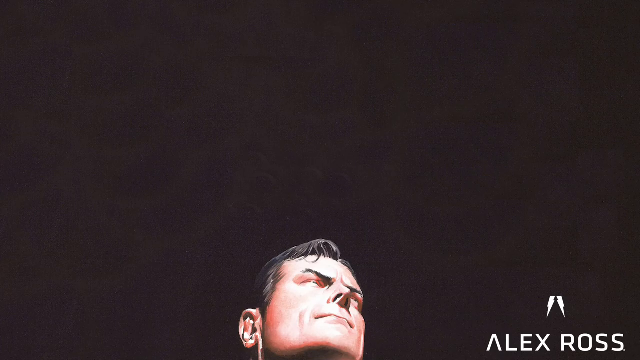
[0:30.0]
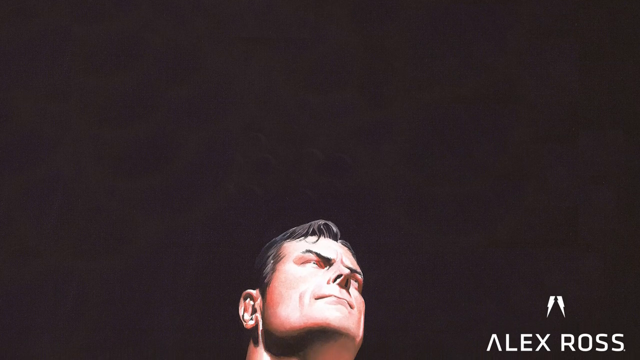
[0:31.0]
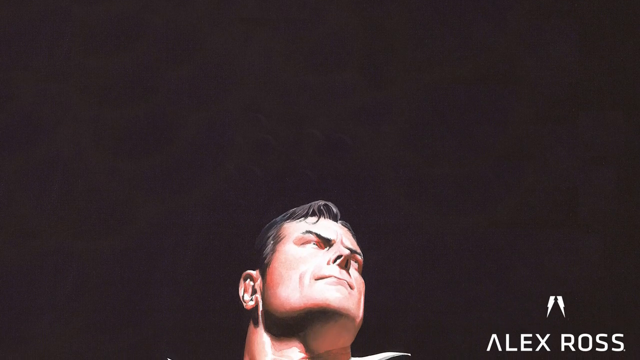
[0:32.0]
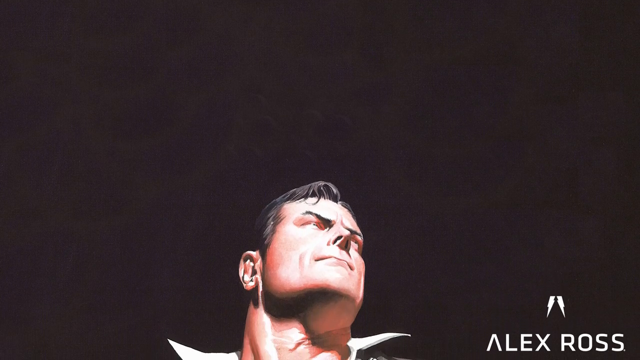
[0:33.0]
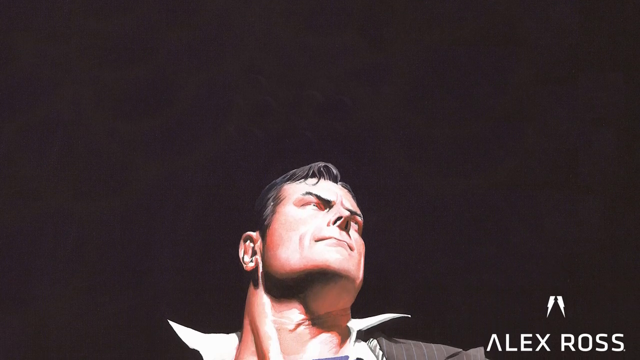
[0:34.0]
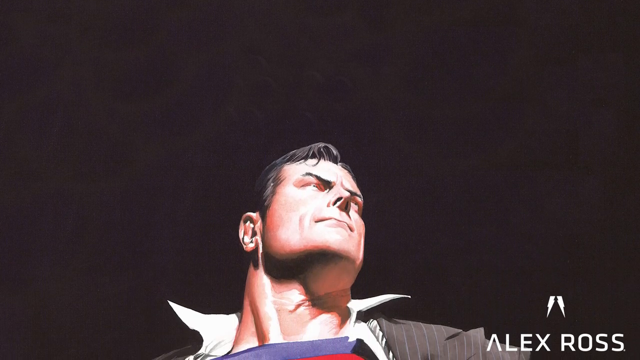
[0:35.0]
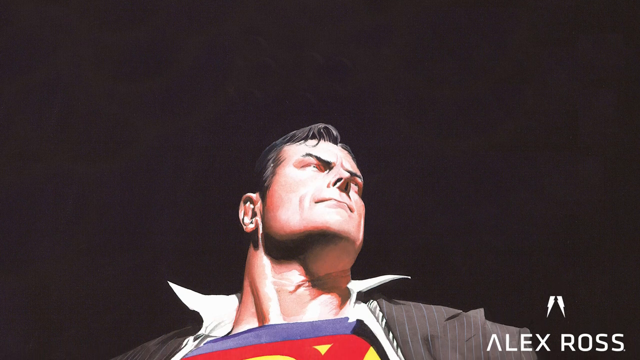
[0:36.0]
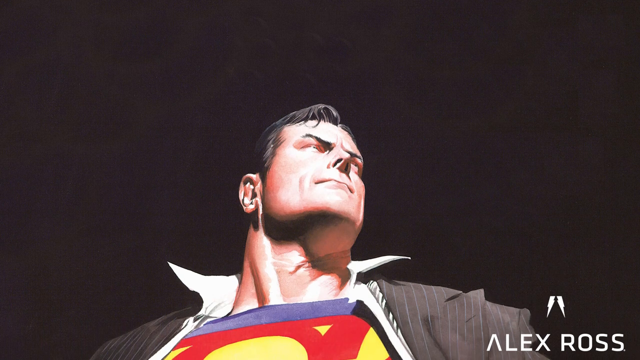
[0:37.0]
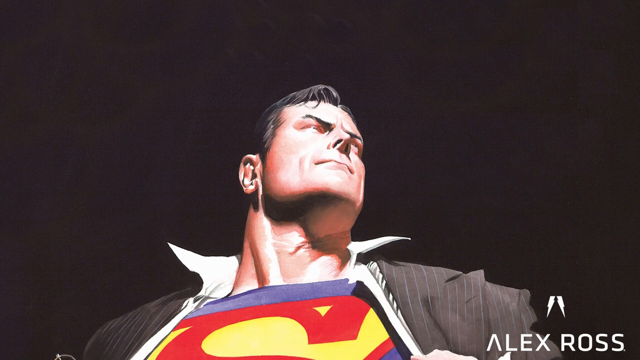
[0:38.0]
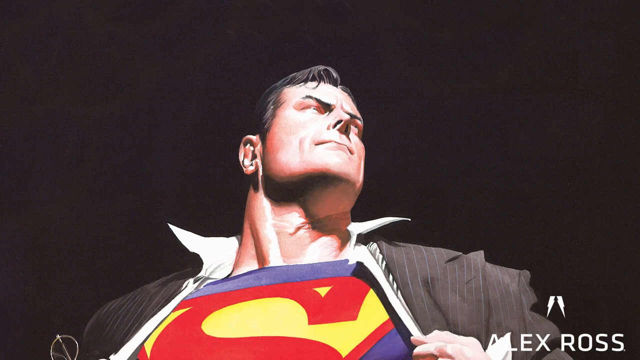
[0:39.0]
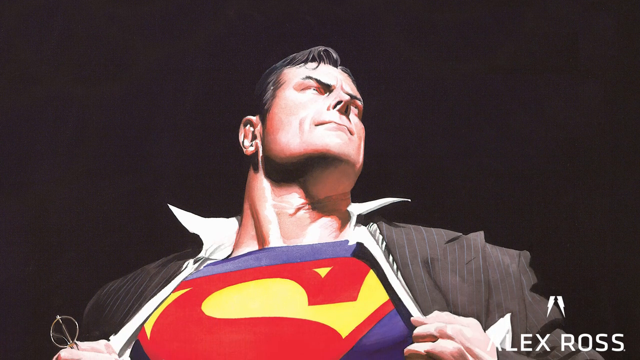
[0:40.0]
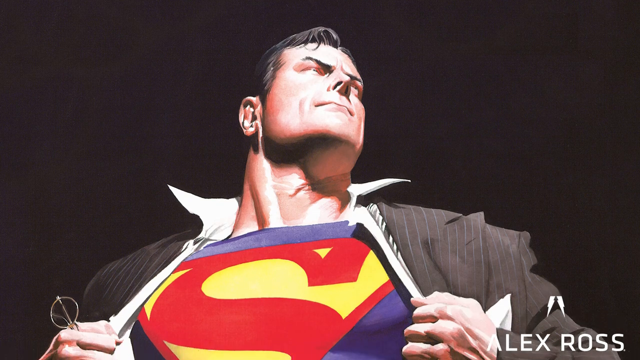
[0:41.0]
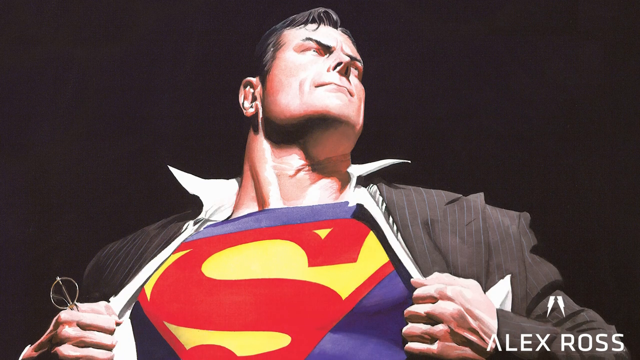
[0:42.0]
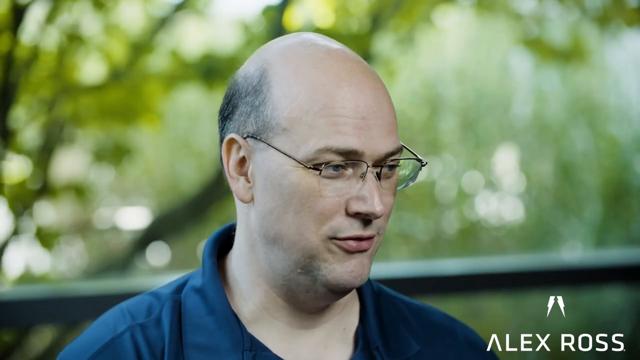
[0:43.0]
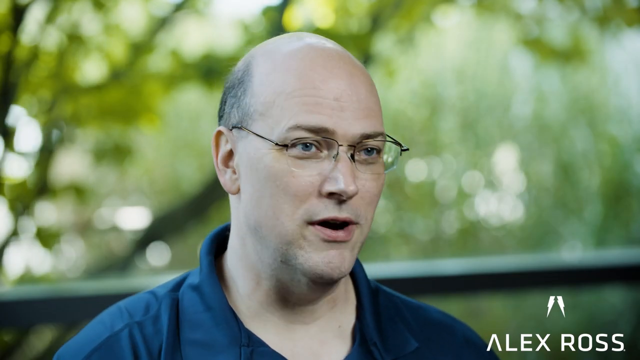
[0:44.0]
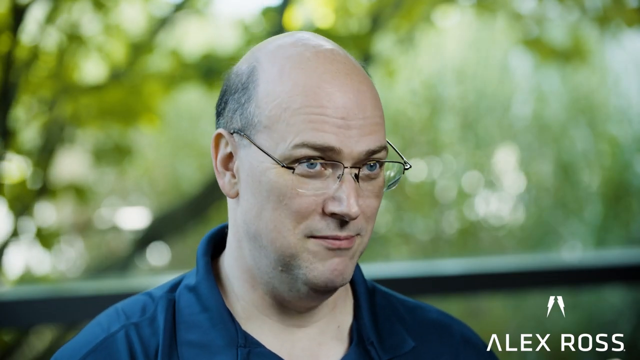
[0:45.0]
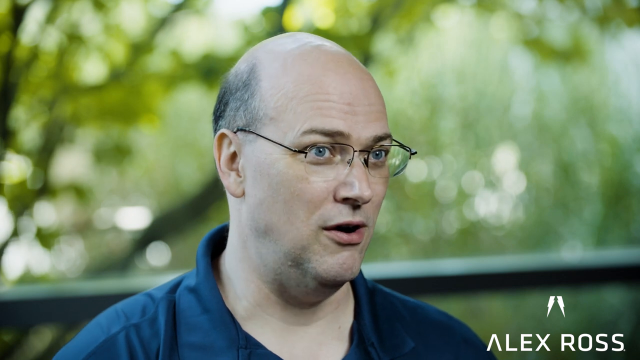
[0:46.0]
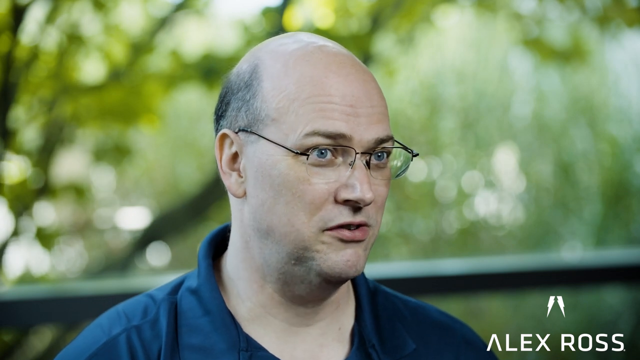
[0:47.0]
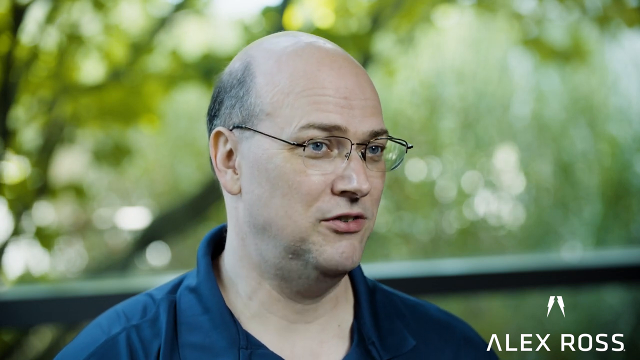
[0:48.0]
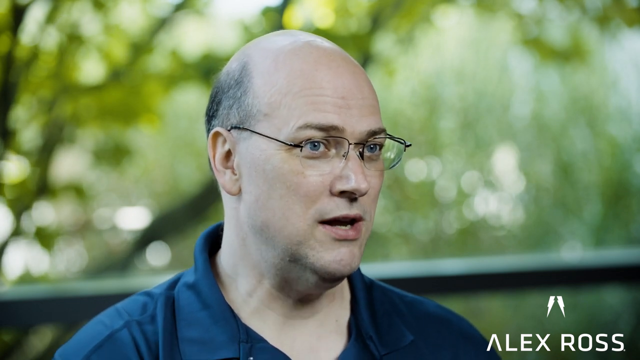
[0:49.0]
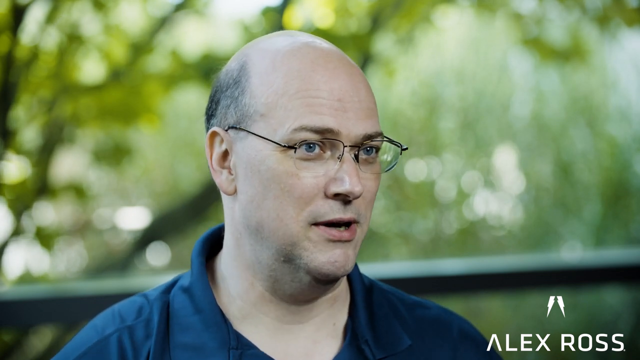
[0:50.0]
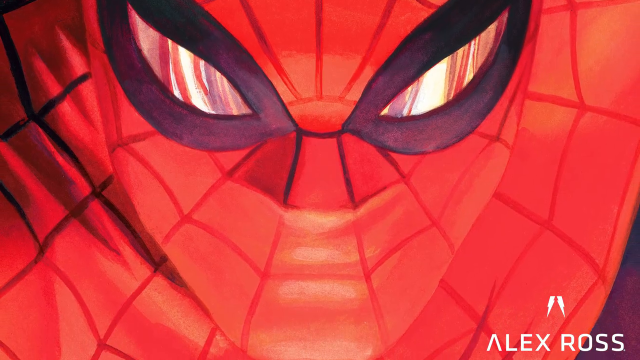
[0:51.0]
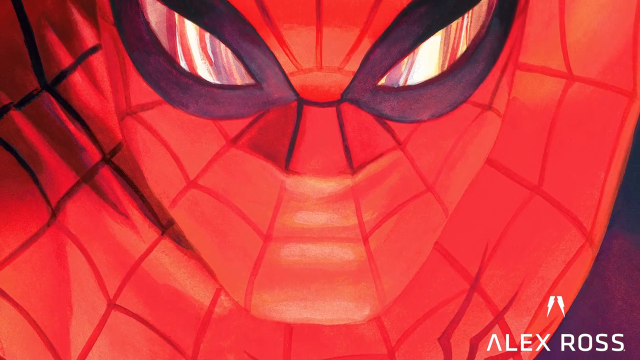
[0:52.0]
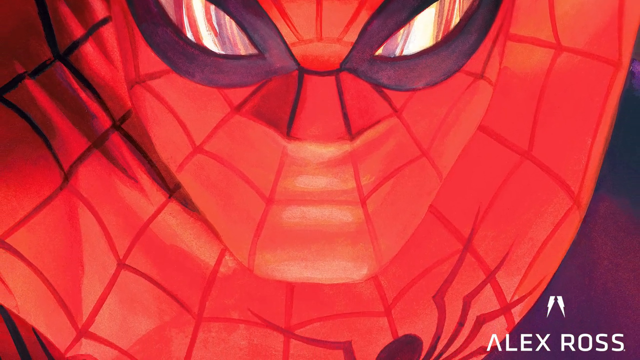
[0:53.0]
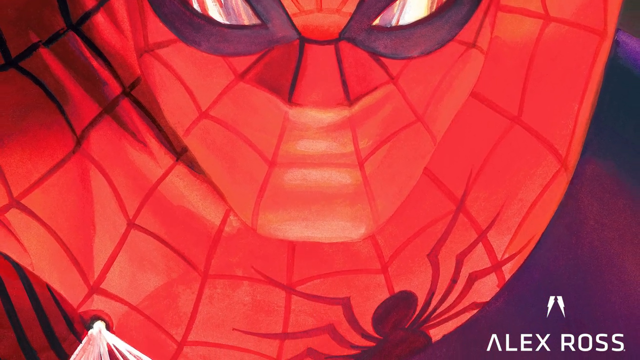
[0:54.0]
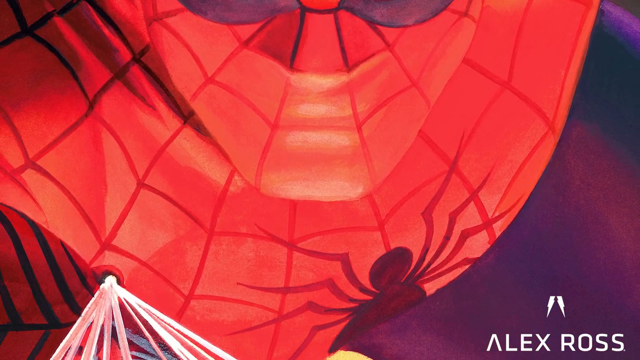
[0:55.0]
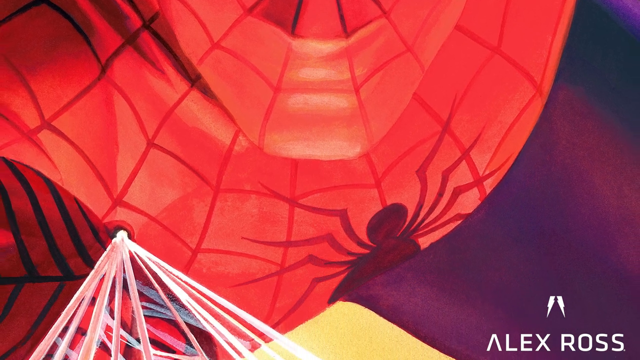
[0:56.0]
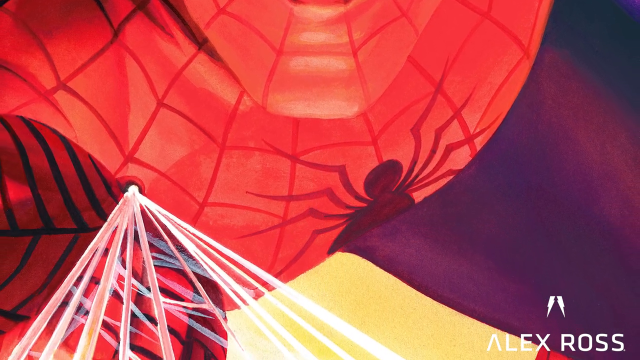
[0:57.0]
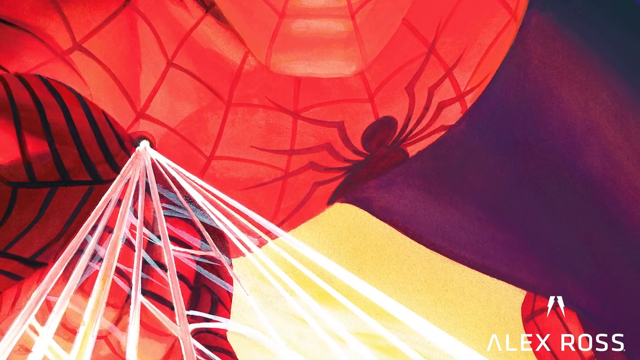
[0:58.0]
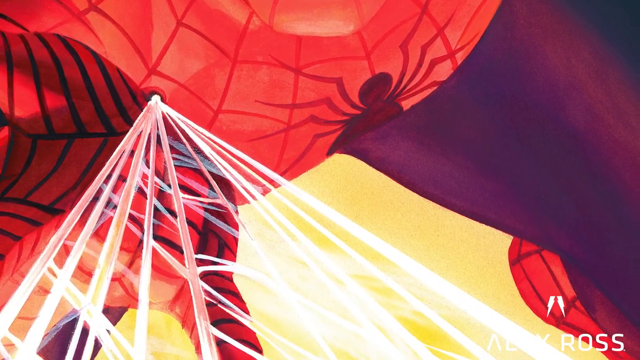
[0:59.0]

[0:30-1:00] The top of Superman's head is at the bottom of the screen. He has dark floppy hair, dark eyebrows and a strong chin, with a shadow under his chin and a wide neck. The lapels of his shirt are open wide as he pulls his shirt apart, his glasses gripped in his right hand, revealing the Superman logo on his chest. The video then cuts to a balding man with wire-framed glasses with black arms. He has quite a wide neck, wears a blue polo shirt, and talks to the camera while looking slightly to the right-hand side of the screen. Next comes an image of Spider-Man, starting at his eyes and moving down, showing a web coming out of his wrist and the spider logo on his chest.